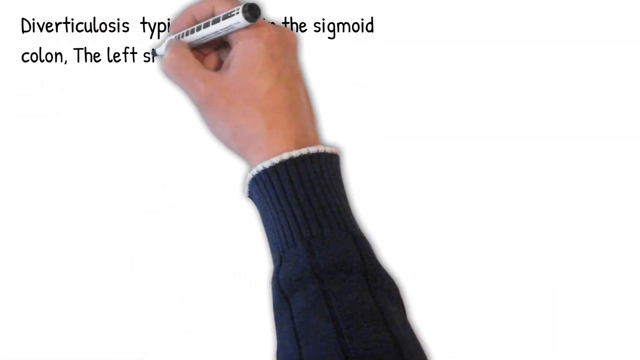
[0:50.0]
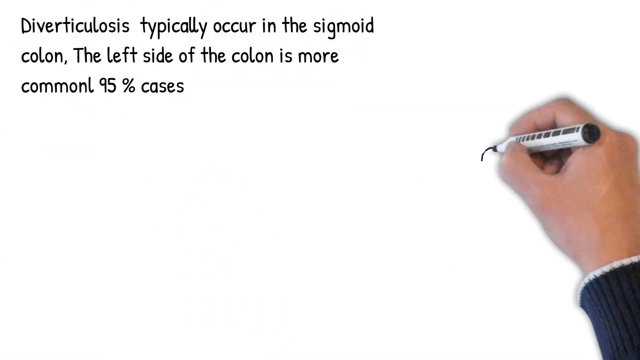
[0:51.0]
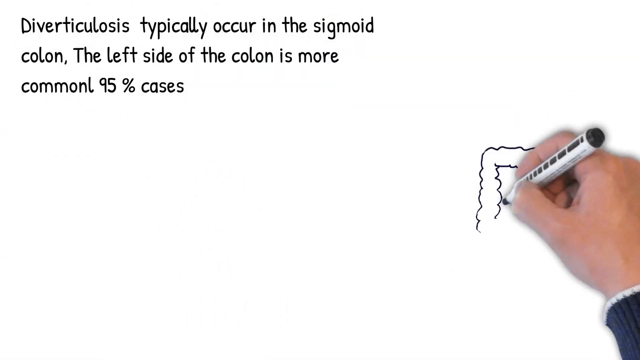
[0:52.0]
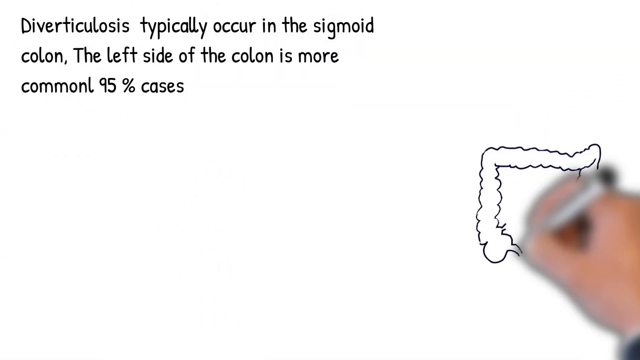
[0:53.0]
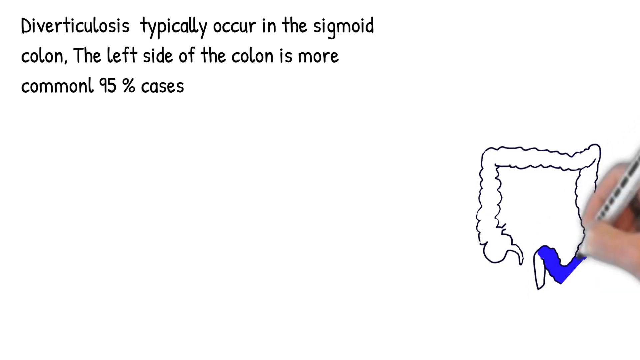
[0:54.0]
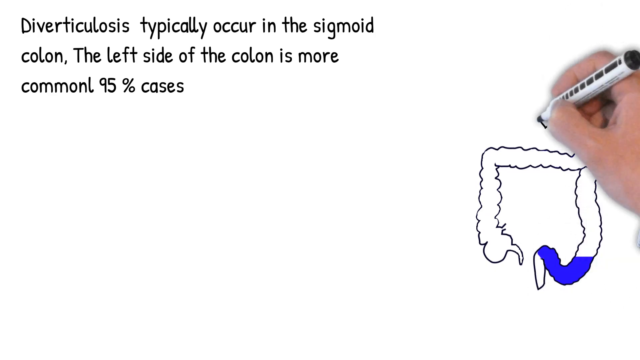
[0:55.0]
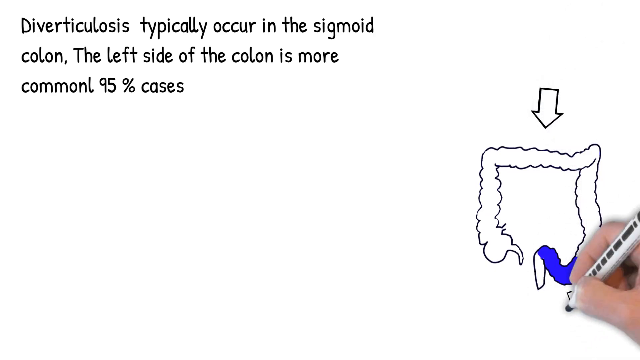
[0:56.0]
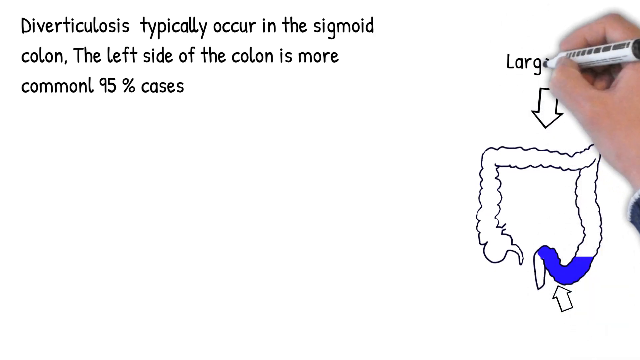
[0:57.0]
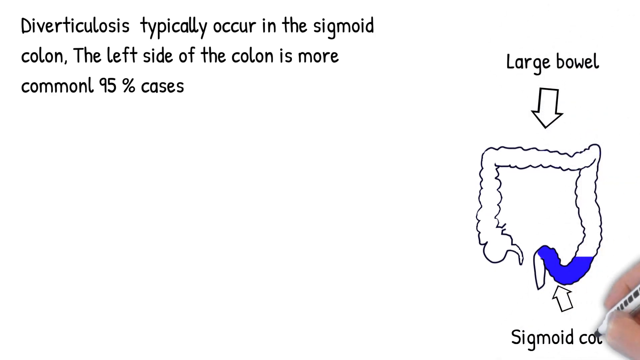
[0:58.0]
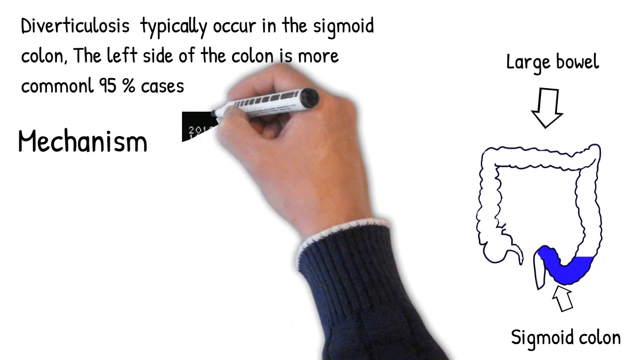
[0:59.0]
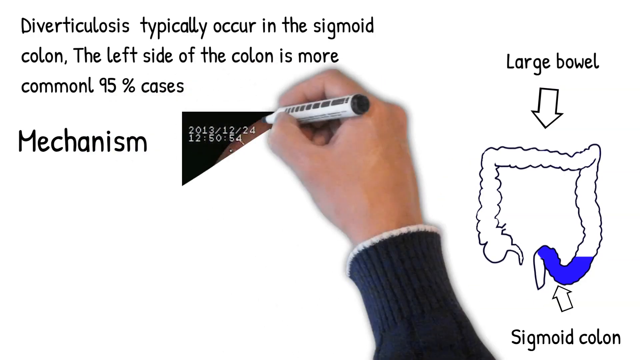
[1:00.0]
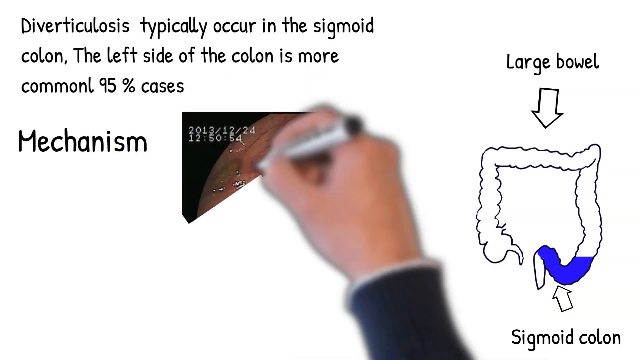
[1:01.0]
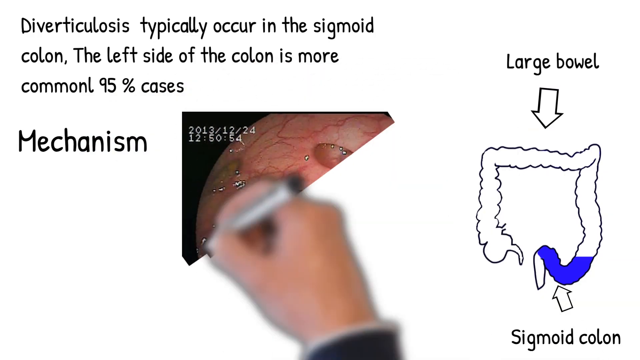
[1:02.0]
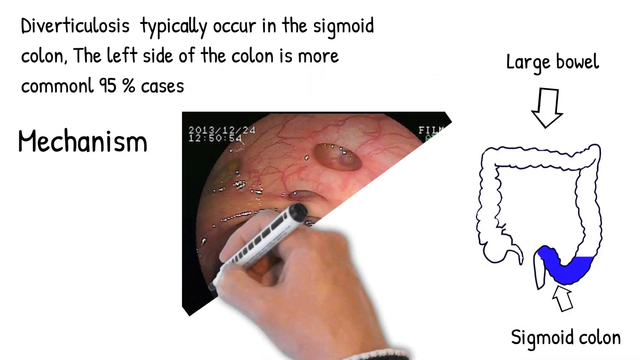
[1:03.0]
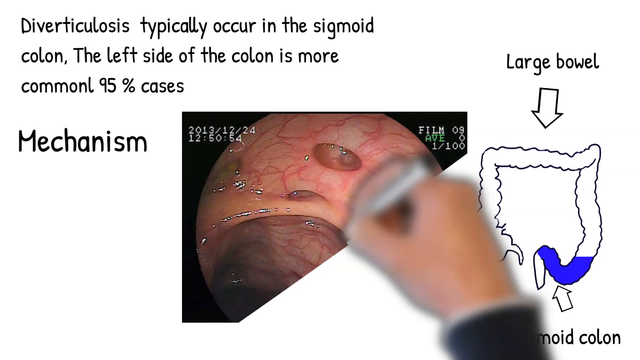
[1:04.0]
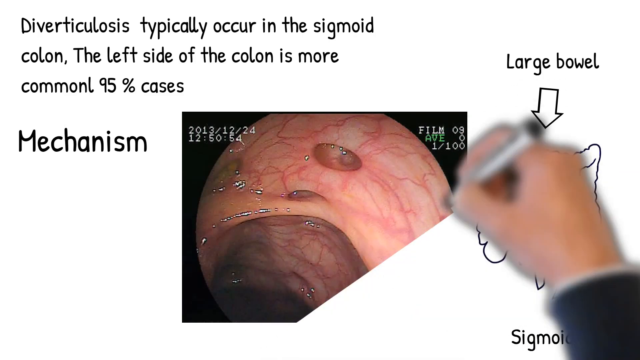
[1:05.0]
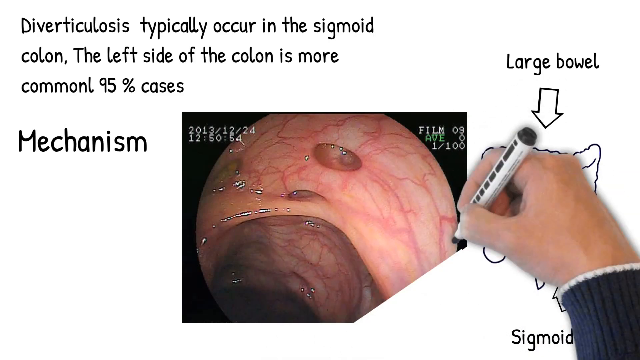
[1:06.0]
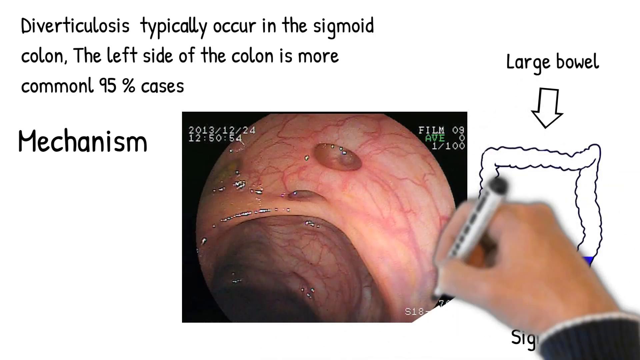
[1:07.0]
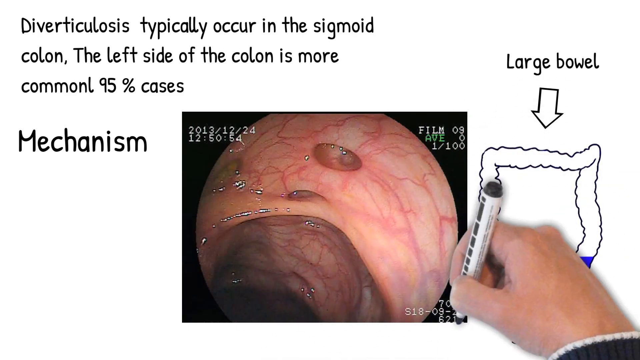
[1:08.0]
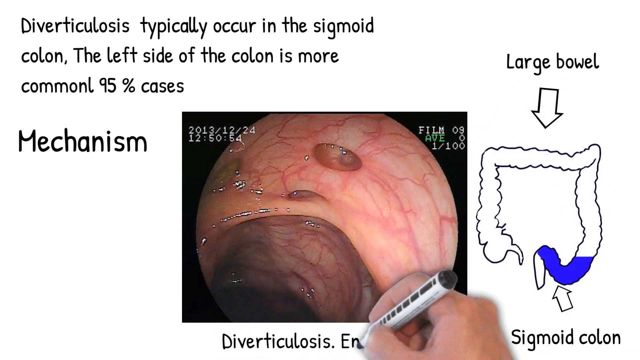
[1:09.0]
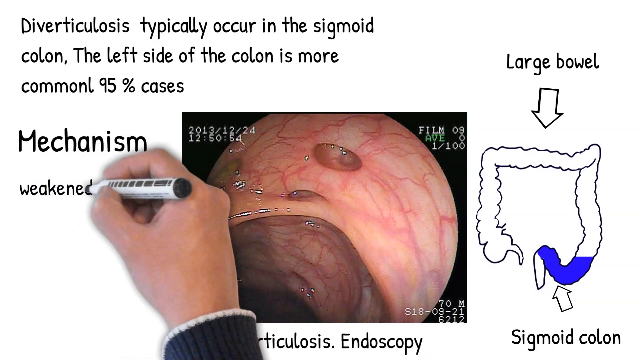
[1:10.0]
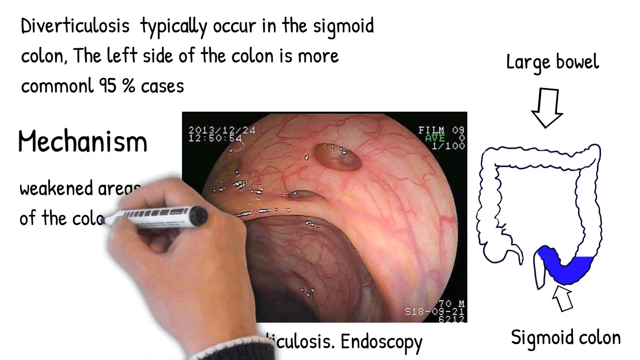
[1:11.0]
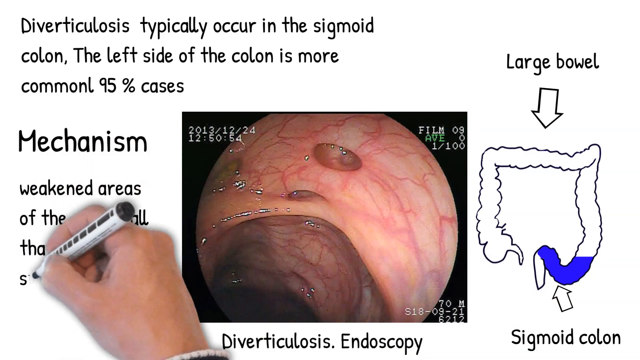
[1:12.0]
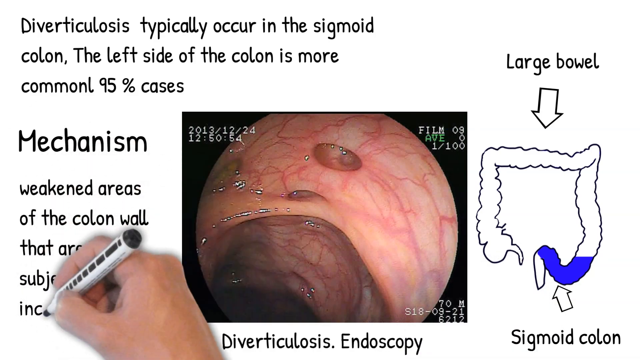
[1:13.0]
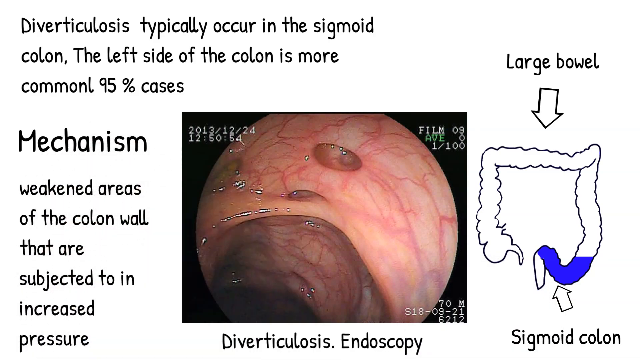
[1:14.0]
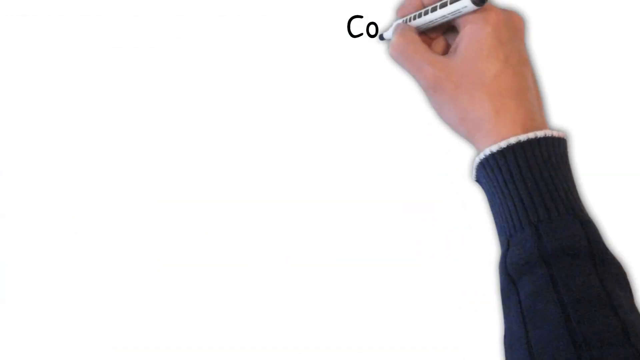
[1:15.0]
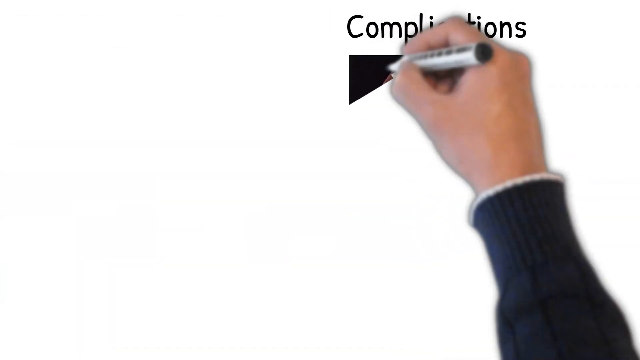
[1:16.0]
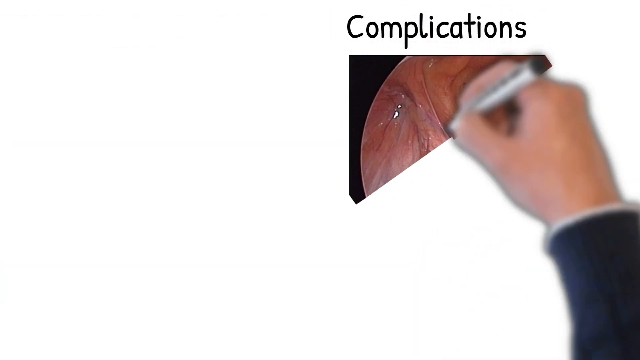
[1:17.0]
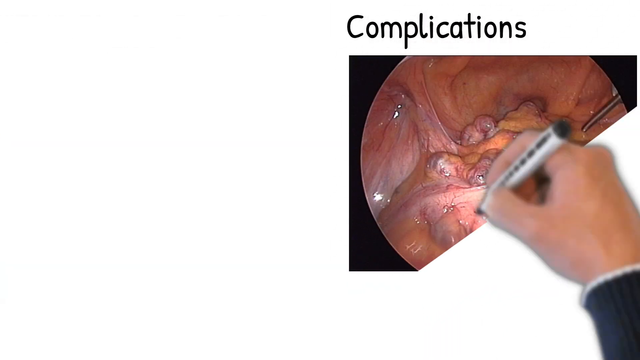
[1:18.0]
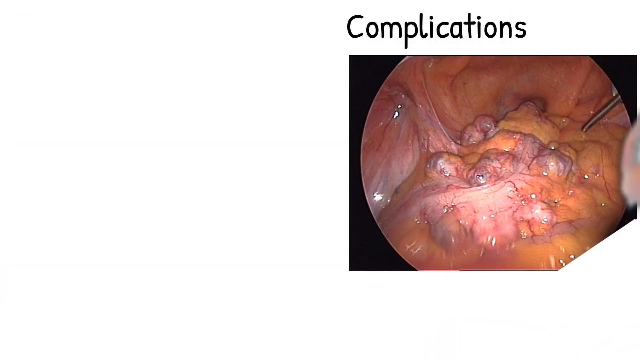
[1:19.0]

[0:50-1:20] The whiteboard marker continues writing words and drawing pictures. Text says diverticulitis typically occurs in the sigmoid colon and that the left side of the colon is more common, occurring in 95% of cases. A picture of the colon is drawn, with a pointer to the area of the sigmoid colon in the large bowel. Then the word "mechanism" appears with an actual picture of the inside of the colon, an endoscopy from somebody with diverticulitis, and the text says the mechanism is "weakened areas of the colon wall that are subject to increased pressure." Complications are then shown with another picture from the endoscopy. The whole time, the hand writes the words and colors the pictures that appear on the screen.